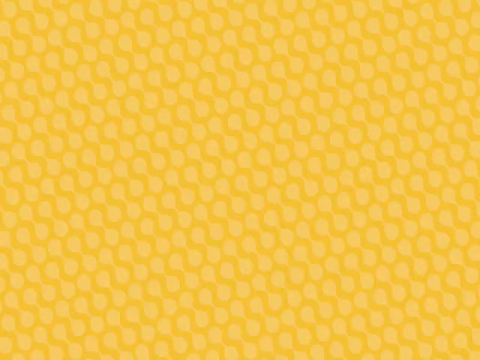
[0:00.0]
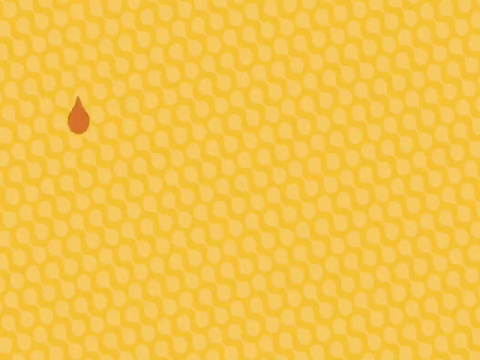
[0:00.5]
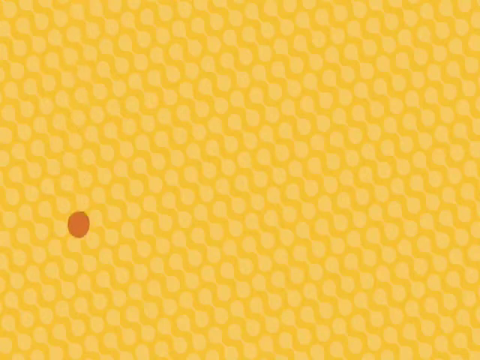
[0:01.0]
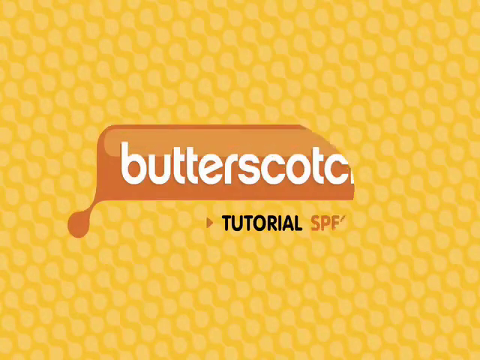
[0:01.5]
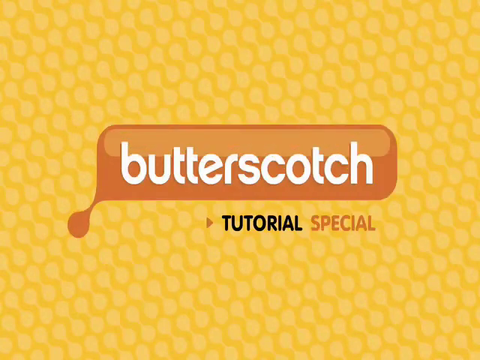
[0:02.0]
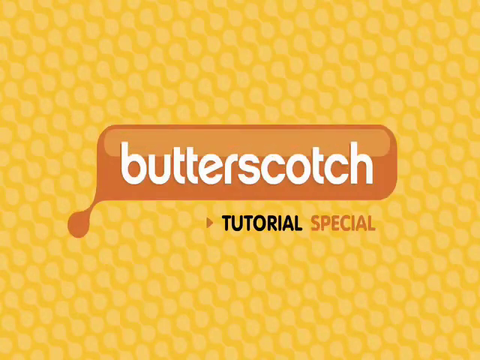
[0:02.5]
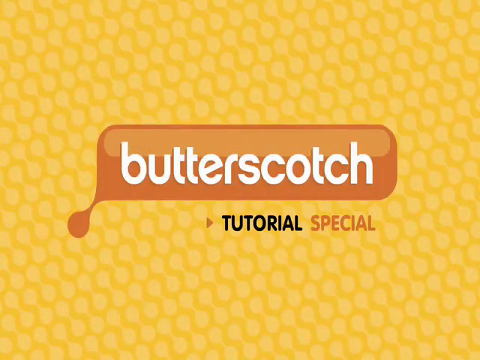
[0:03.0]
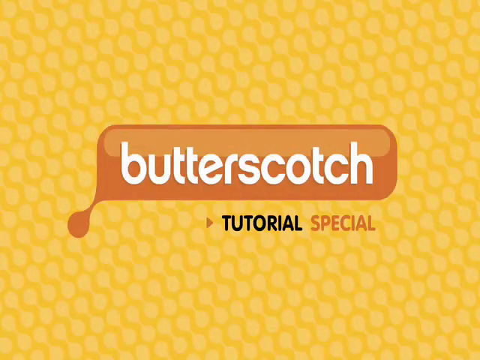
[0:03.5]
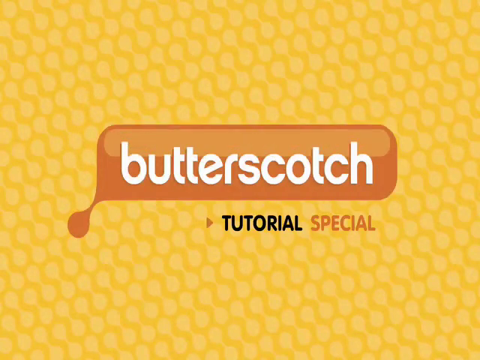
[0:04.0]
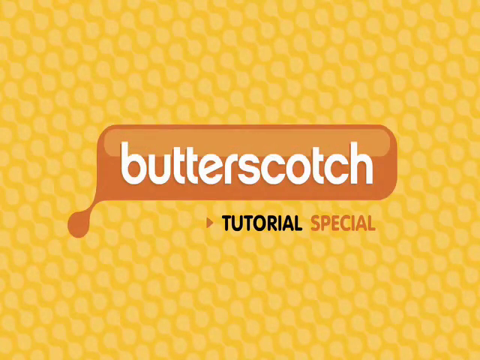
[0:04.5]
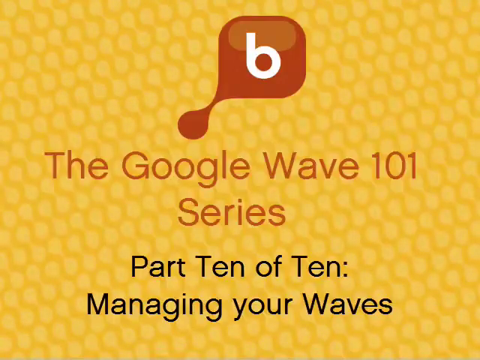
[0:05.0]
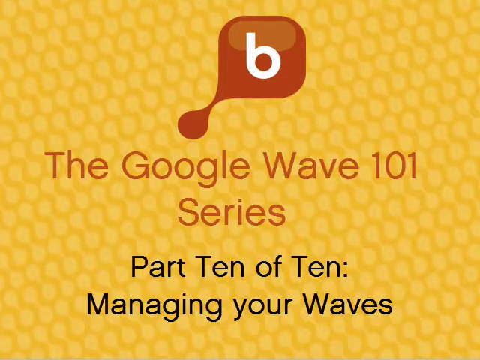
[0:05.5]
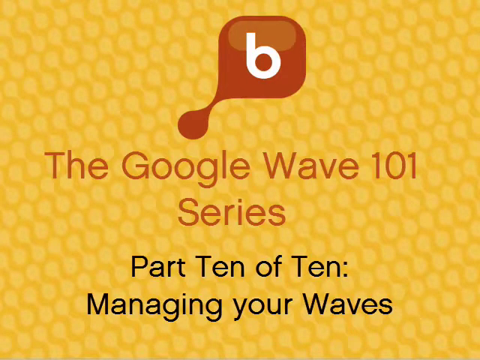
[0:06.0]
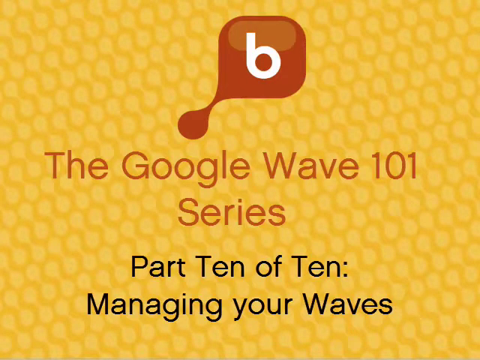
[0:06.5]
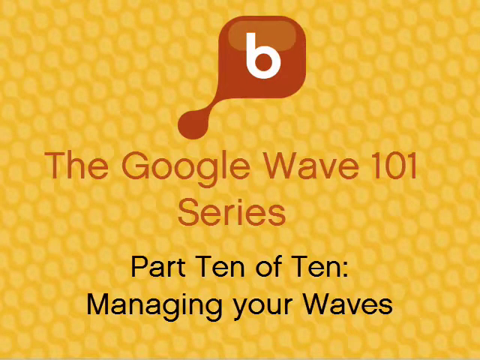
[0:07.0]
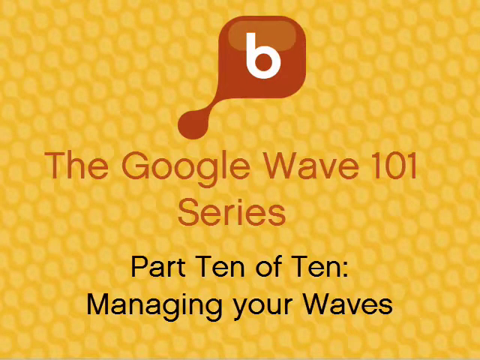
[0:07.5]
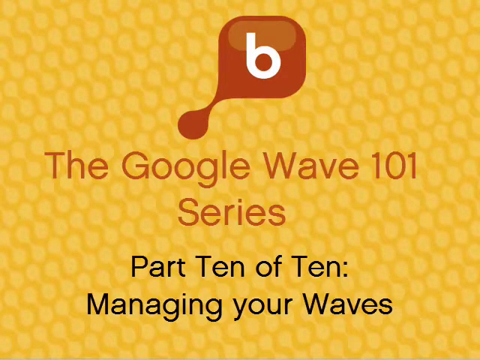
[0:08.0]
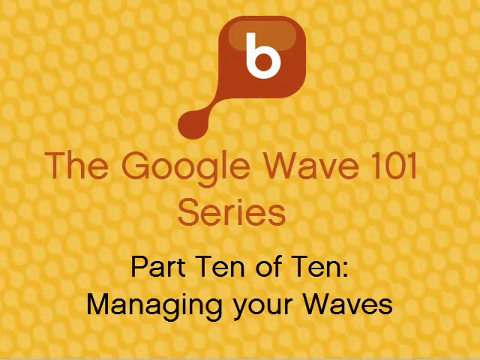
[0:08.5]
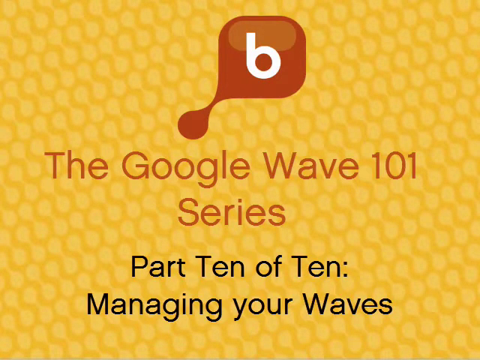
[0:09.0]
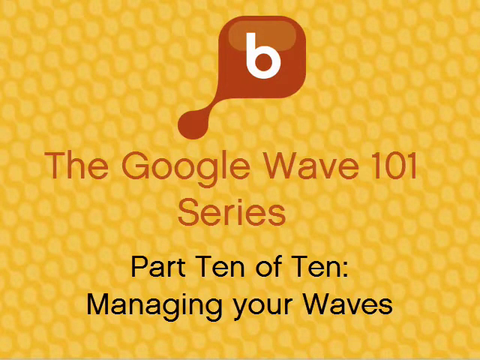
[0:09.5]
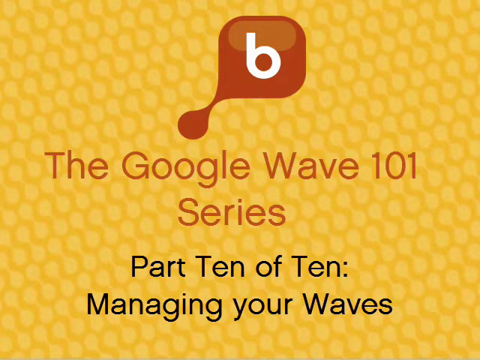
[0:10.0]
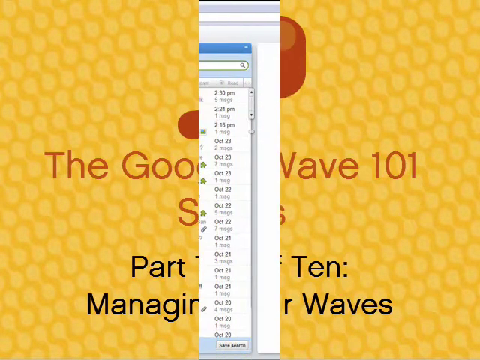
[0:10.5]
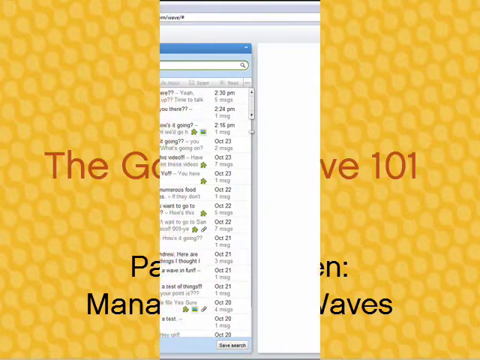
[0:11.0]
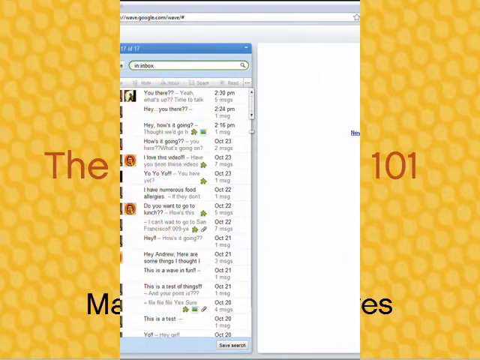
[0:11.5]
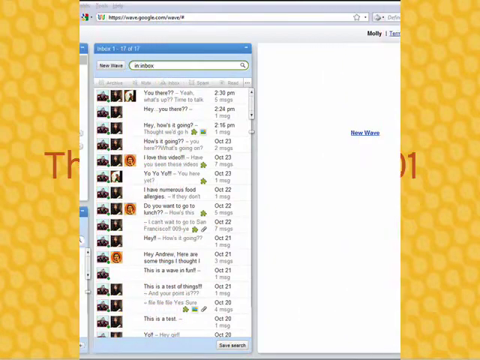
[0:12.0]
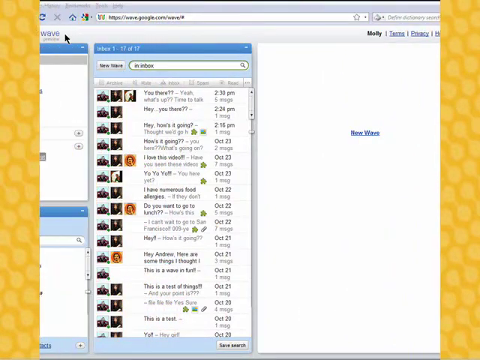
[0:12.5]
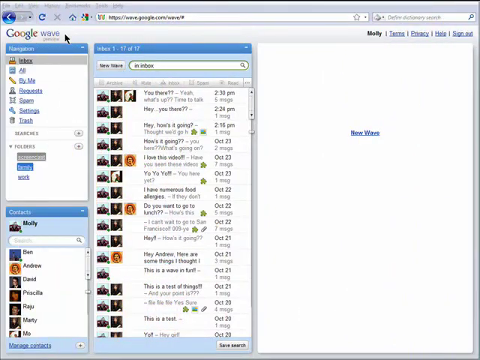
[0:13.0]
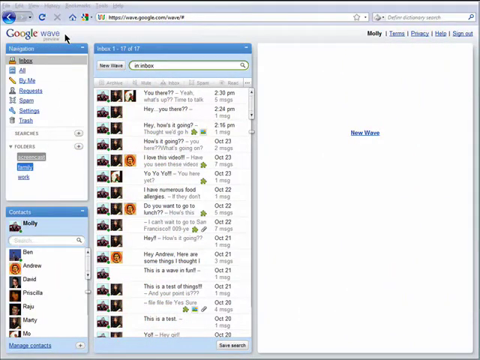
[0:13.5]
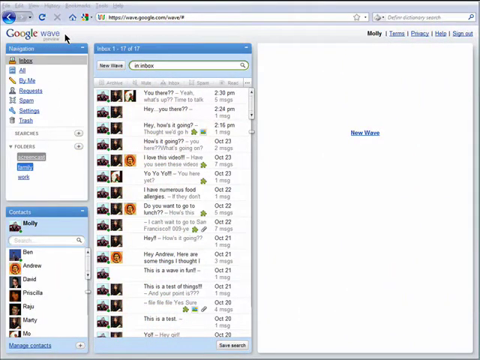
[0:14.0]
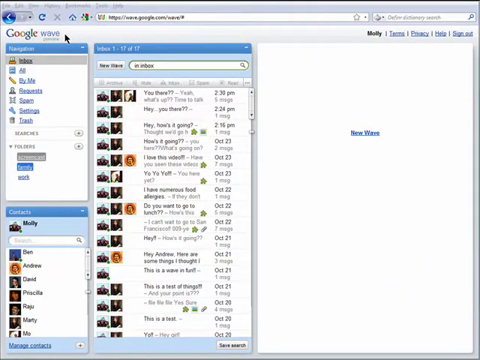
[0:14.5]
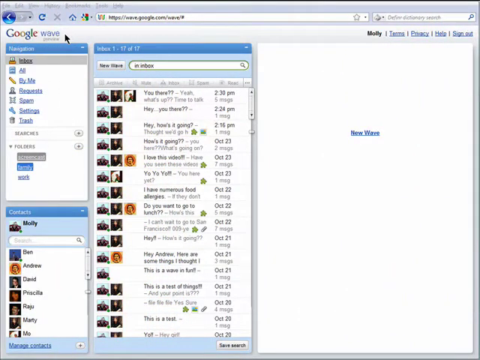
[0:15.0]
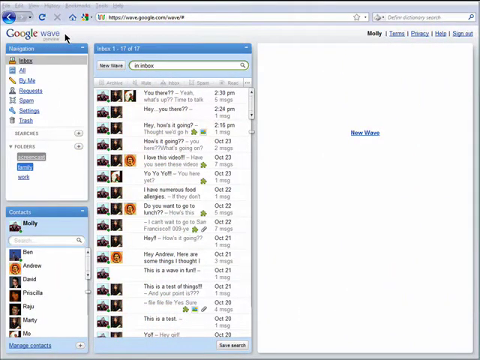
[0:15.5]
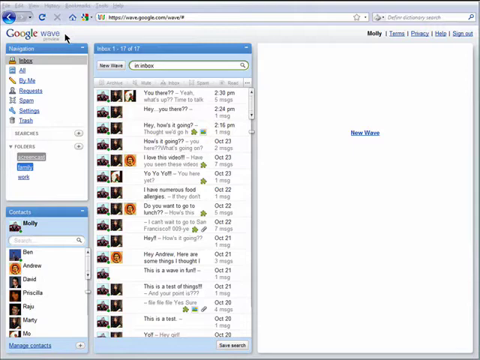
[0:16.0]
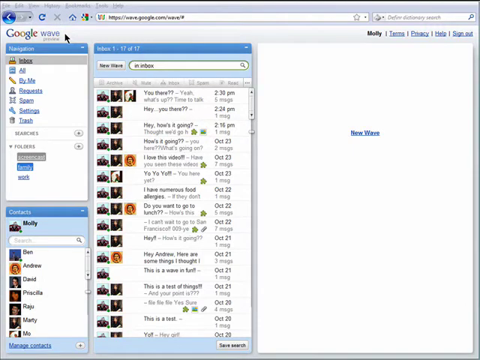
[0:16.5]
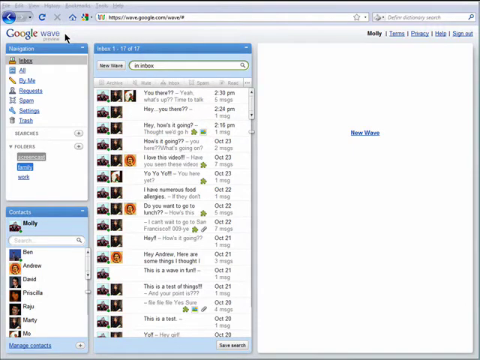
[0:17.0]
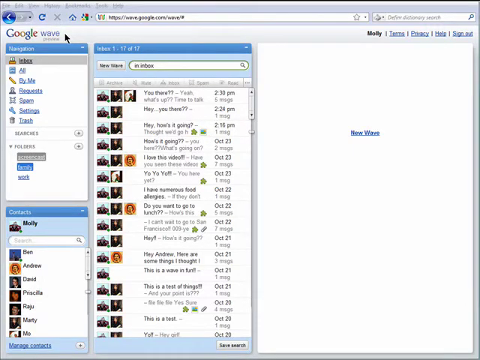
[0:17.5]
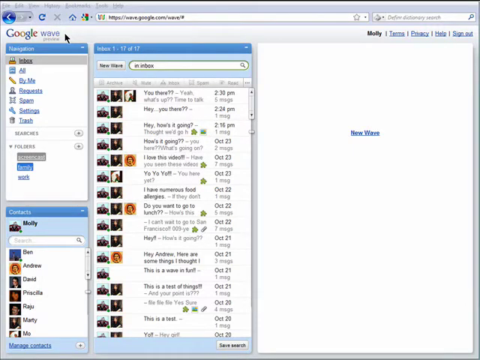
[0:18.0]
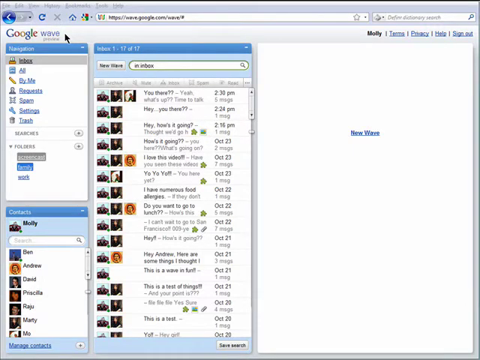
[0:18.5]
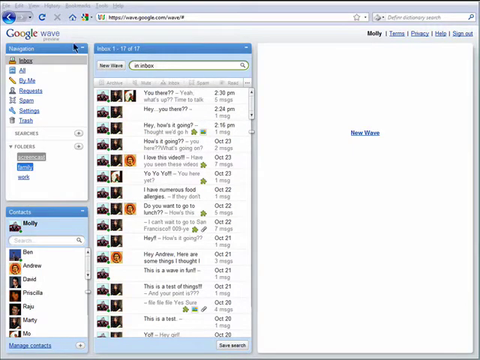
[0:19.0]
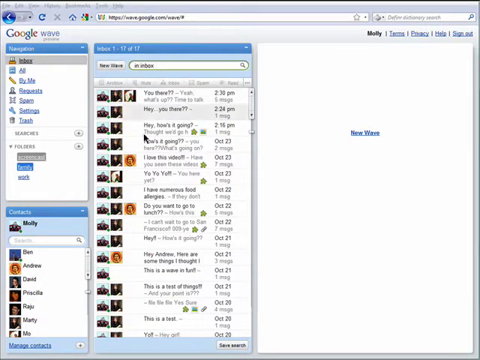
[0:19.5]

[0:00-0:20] The video opens on a pattern of light orange dots, each with a darker orange around it, all fairly uniform. A little dark orange droplet comes down and turns into a blob. "butterscotch" appears in white, and underneath it says "tutorial special", apparently a tutorial from Butterscotch. The same kind of emblem is above: a lowercase letter "b" in white on a darker orange shape, like a little blob going into a bigger cube with rounded corners. Underneath, in orange, it says "the Google Wave 101 series", with "series" on a second line, and below that, in black on two lines, "part 10 of 10 managing the waves". There are black bars on the left and right, so the image does not take up the entire screen. The scene slowly morphs from left to right into Google Wave, an application in a window with file, edit and view at the top, a blue left arrow with a refresh button, and the URL address to the right. Underneath it says "Google Wave". A navigation bar includes the inbox, which shows 17 total emails. The guy scrolls down and clicks on the third email down. The desktop background or wallpaper has a texture that looks kind of like corn.